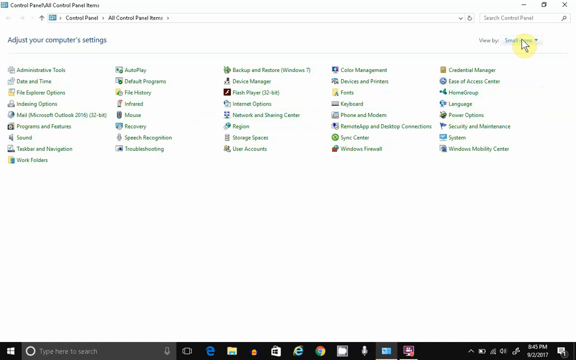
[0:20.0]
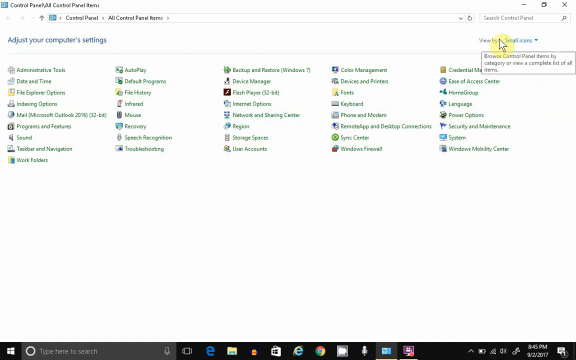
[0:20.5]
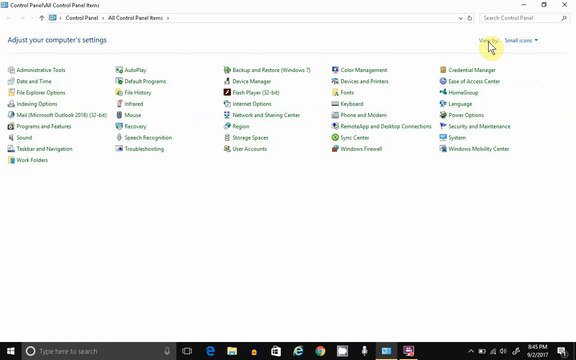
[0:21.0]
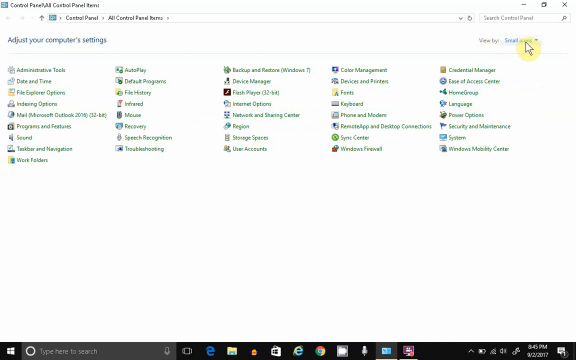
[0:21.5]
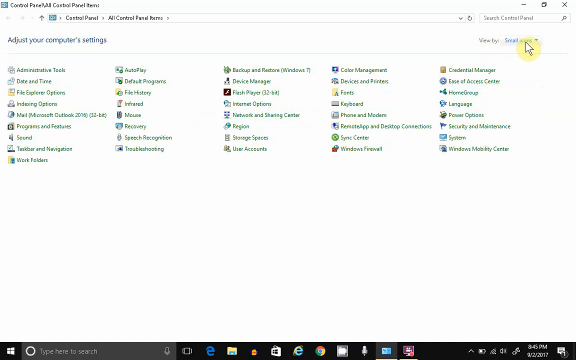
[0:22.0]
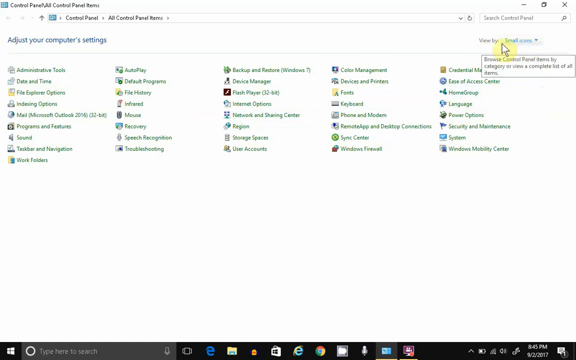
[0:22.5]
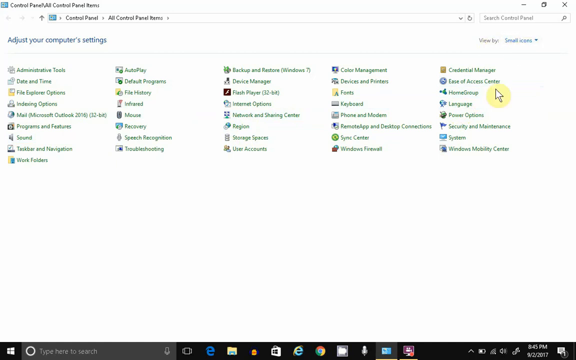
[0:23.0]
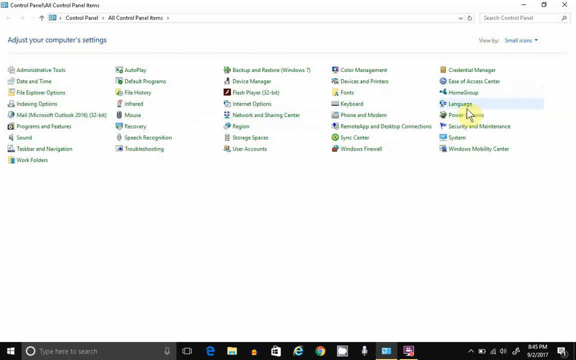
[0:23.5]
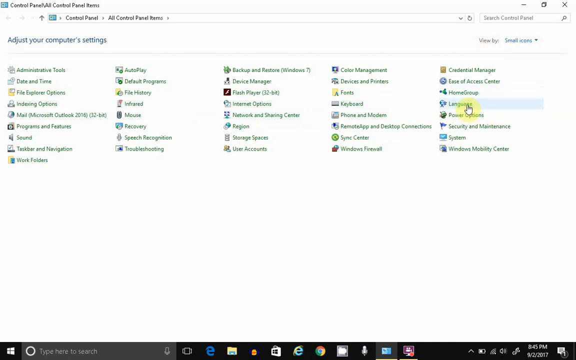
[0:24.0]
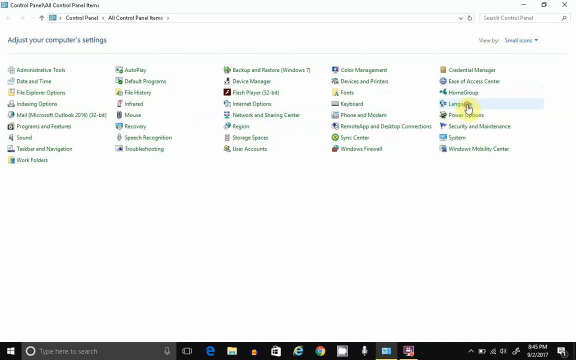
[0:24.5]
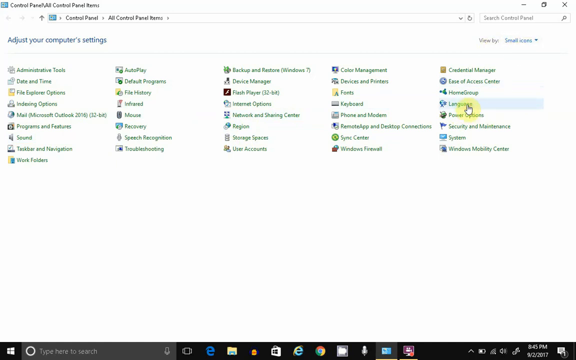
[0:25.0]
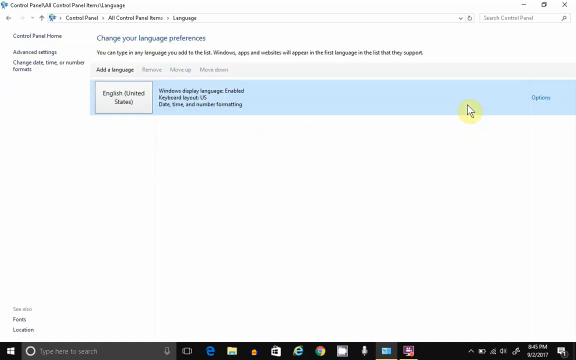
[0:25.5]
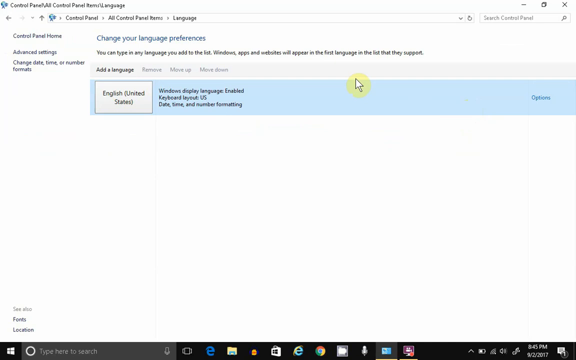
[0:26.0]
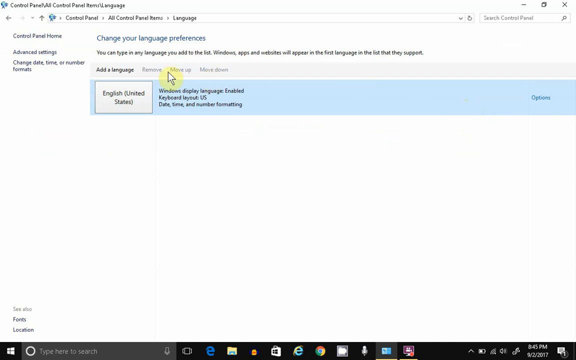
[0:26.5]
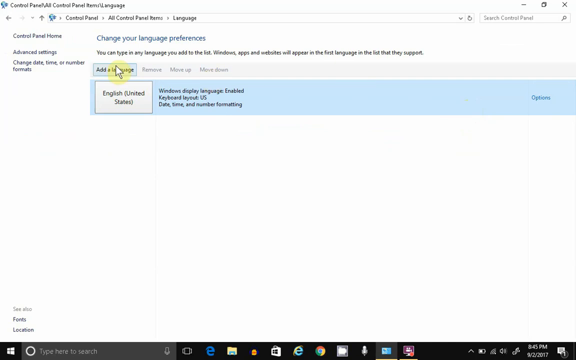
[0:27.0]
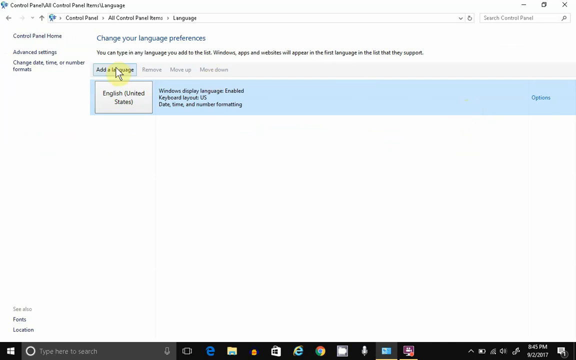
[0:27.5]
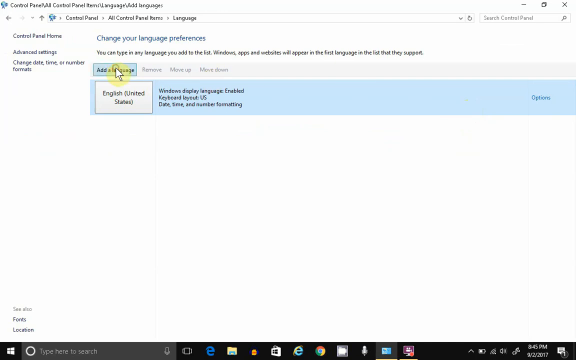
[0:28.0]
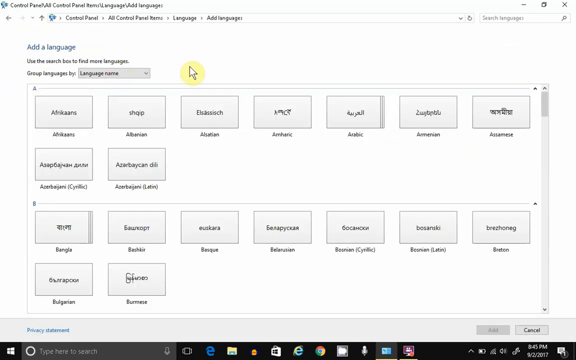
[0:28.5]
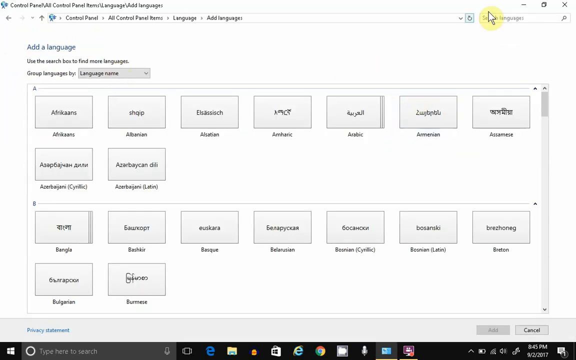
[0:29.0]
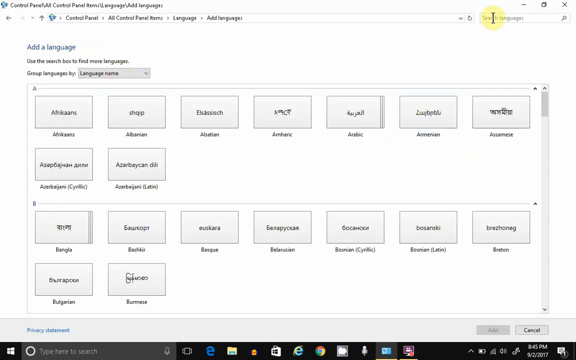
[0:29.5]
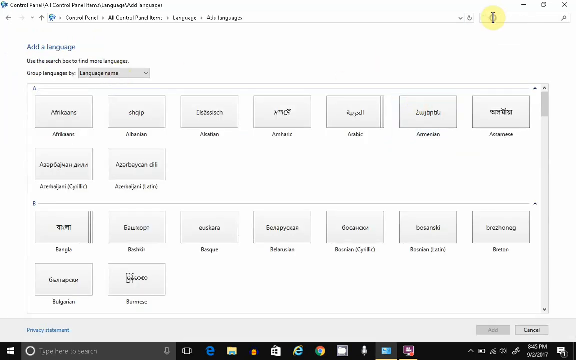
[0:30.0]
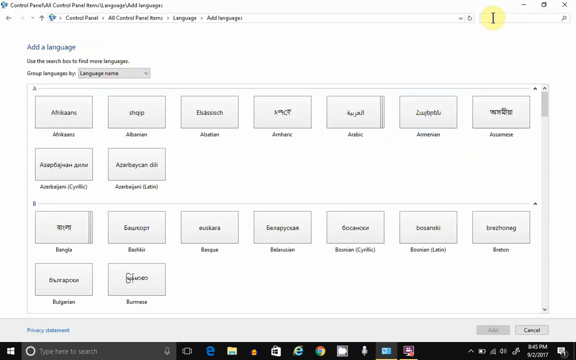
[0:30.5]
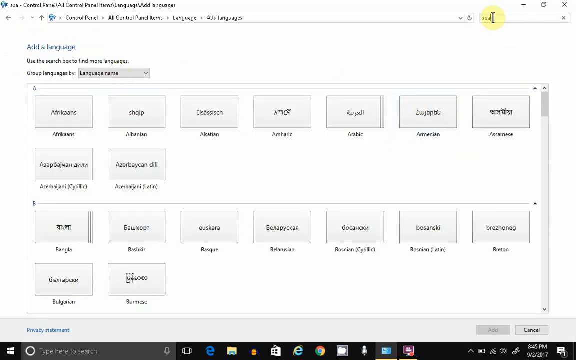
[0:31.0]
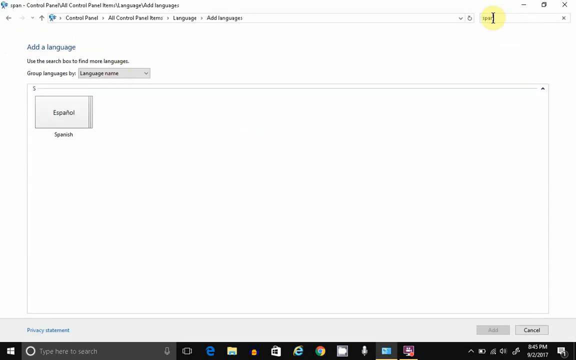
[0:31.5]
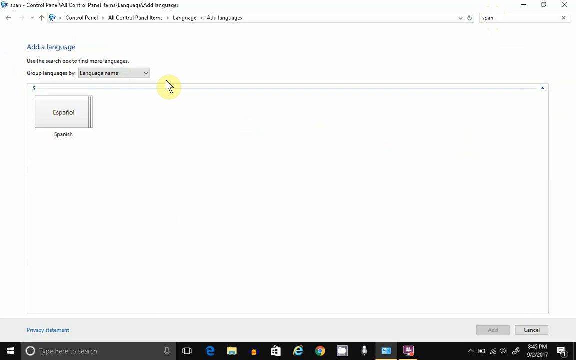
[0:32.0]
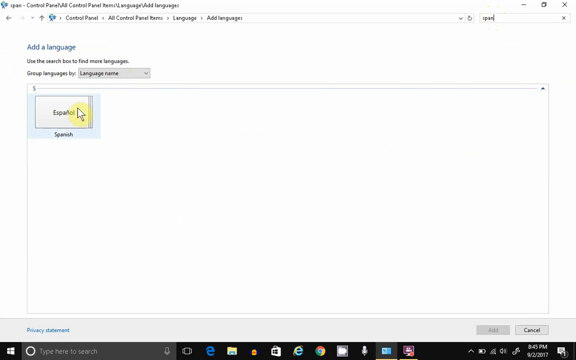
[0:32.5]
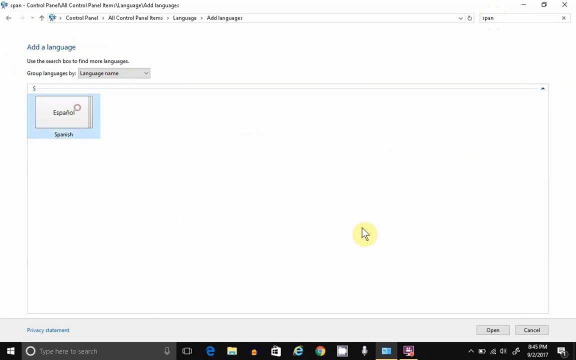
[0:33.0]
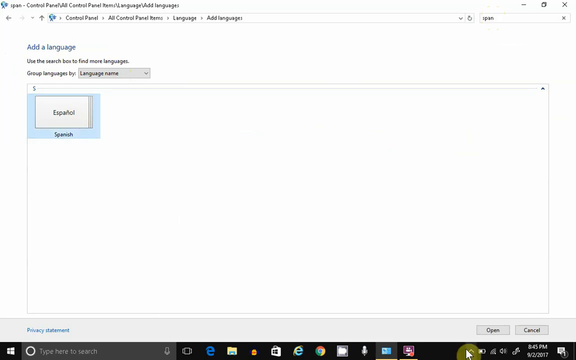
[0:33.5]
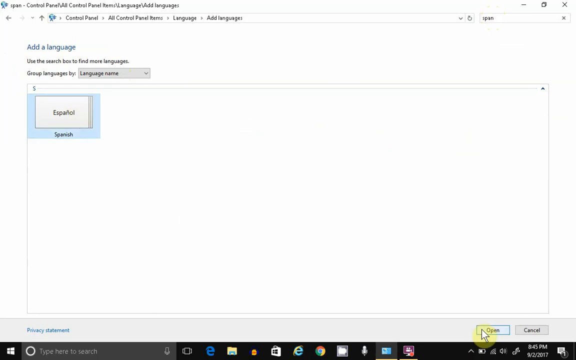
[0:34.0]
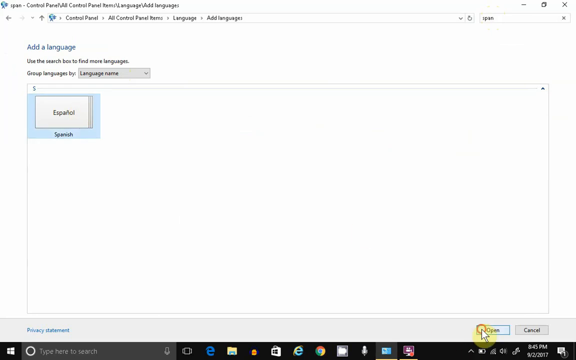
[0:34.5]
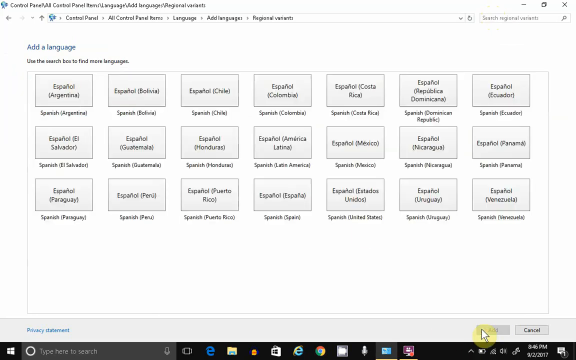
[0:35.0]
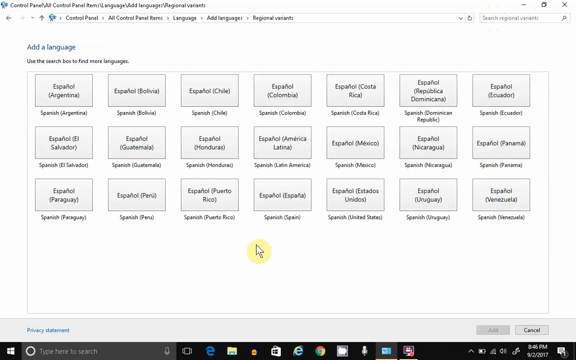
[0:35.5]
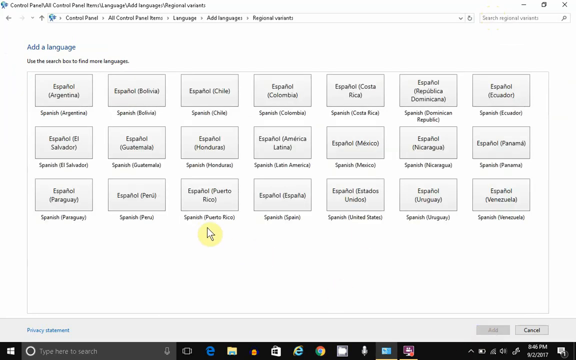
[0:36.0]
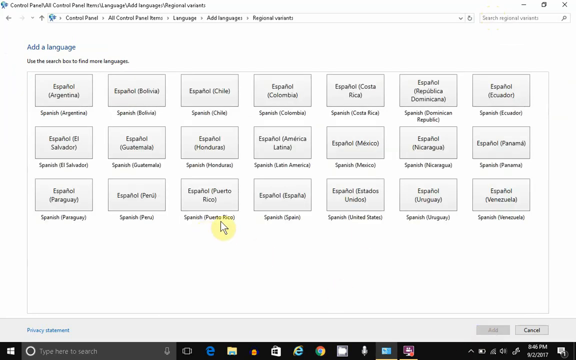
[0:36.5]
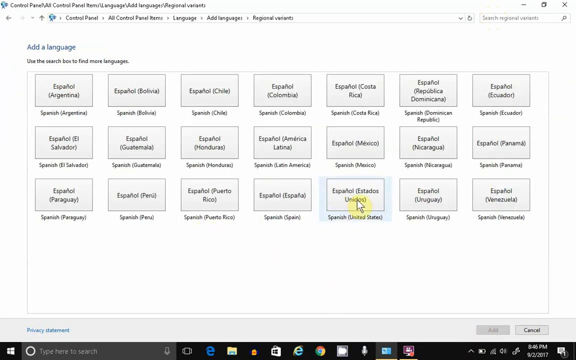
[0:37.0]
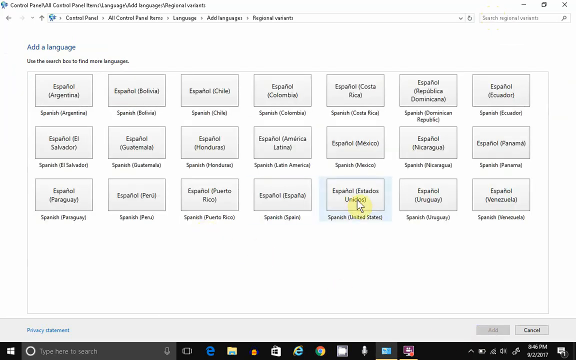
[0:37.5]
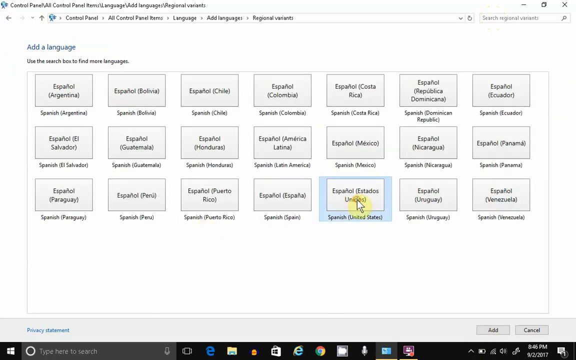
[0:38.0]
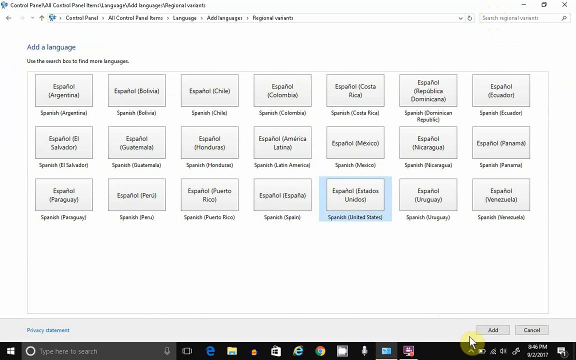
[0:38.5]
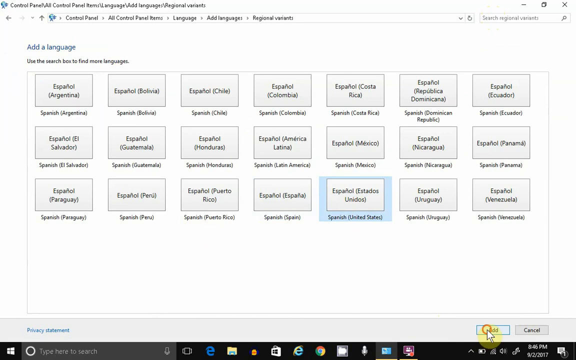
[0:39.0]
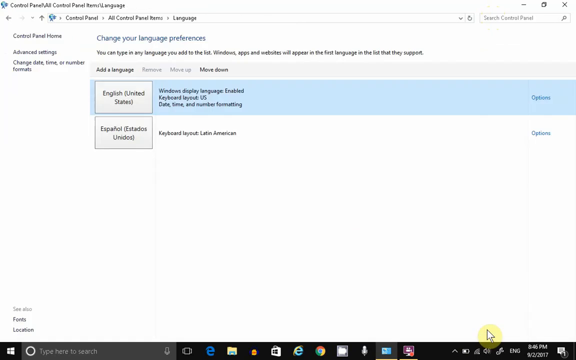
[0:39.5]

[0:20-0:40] A cursor moves around a screen, and the area around the cursor is shaded yellow. The person clicks on language to add one, and an "add a language" page appears. They set it, then click another button at the bottom; it looks like it might be Spanish. They bring the cursor up to the upper right portion of the screen and type something into the search bar in the upper right corner. A pop-up appears where another language can be added to the system, and apparently two languages are now added. The screen stays on the page showing all the choices available.